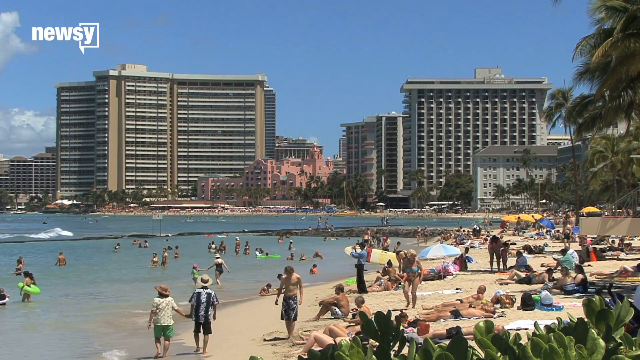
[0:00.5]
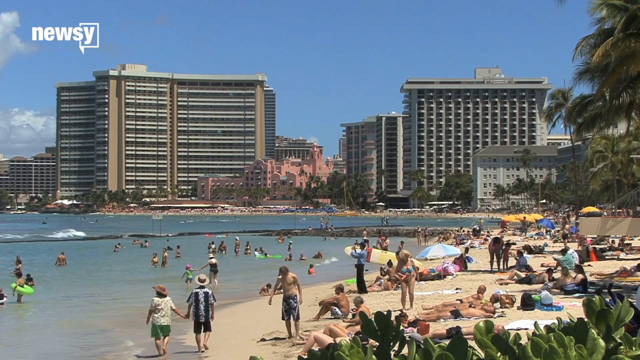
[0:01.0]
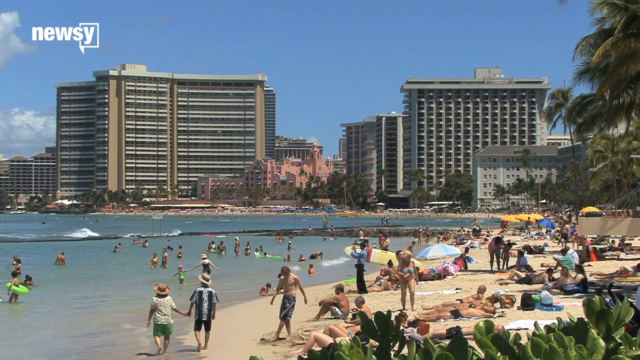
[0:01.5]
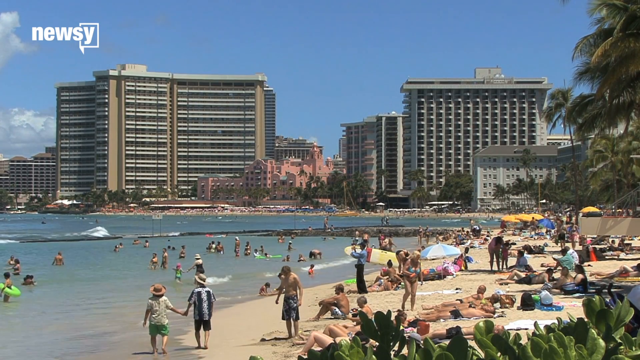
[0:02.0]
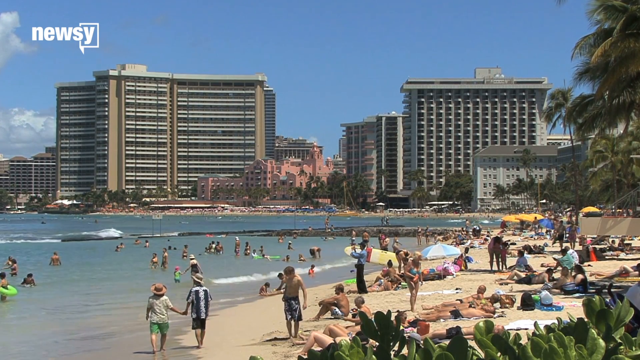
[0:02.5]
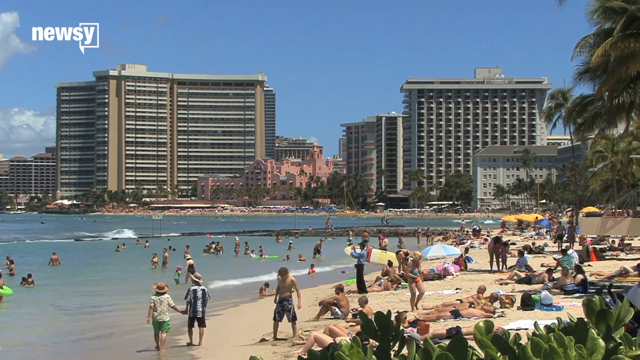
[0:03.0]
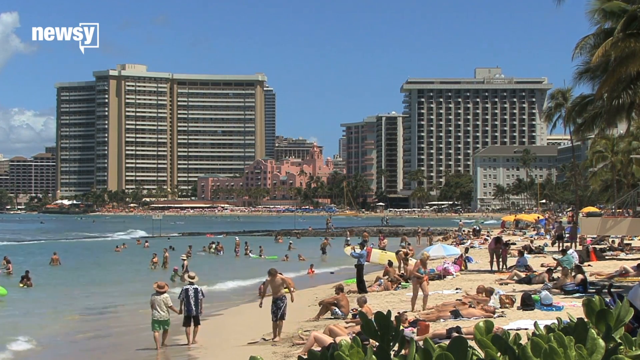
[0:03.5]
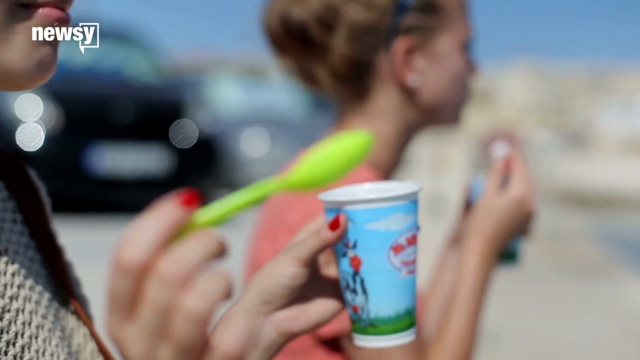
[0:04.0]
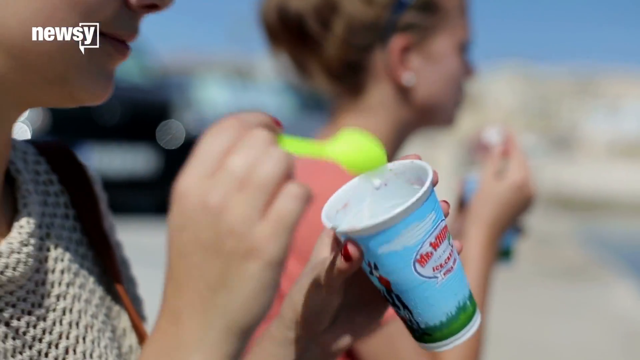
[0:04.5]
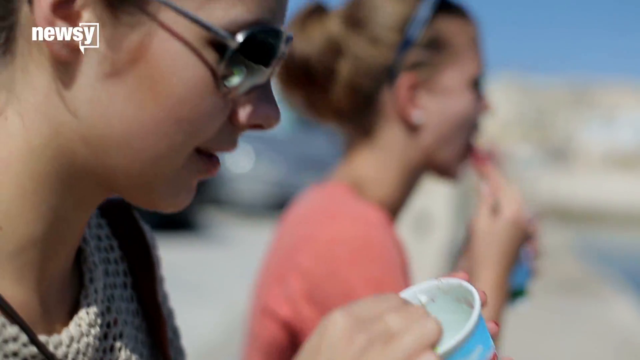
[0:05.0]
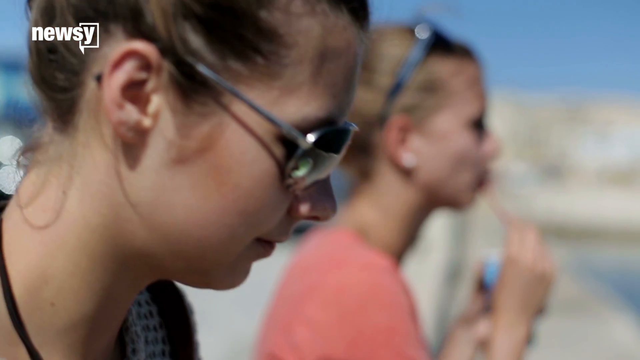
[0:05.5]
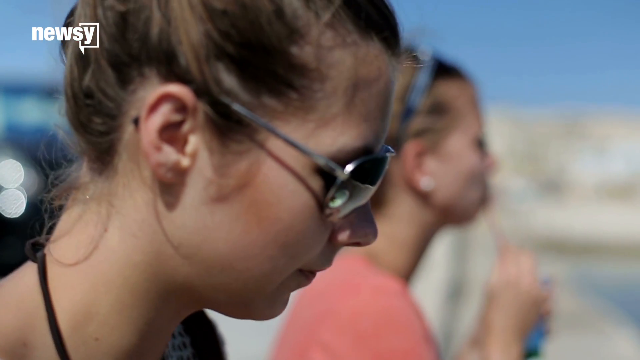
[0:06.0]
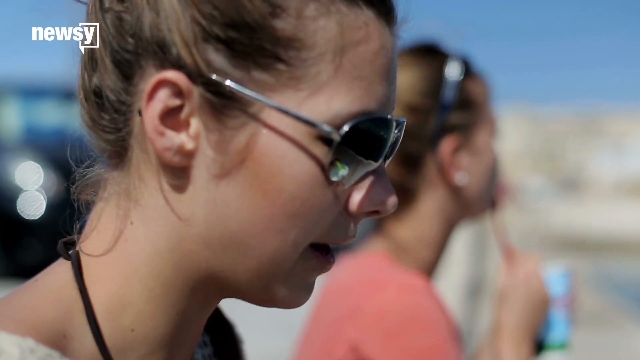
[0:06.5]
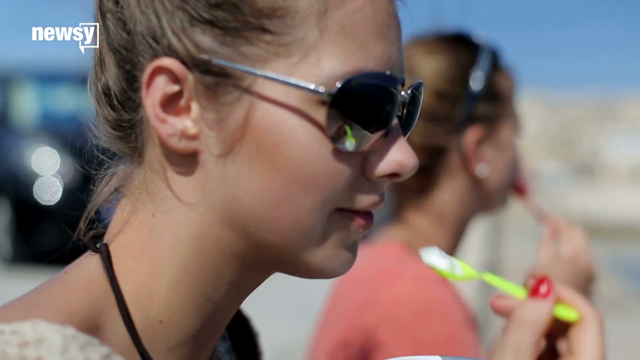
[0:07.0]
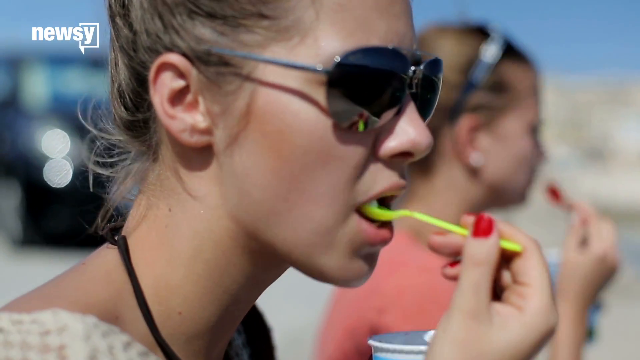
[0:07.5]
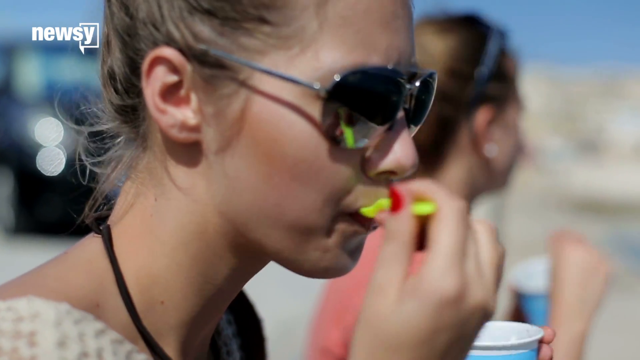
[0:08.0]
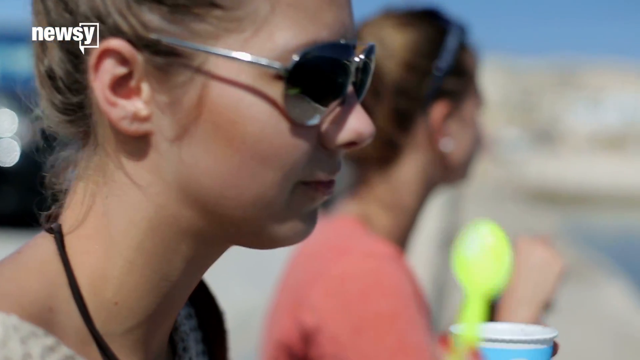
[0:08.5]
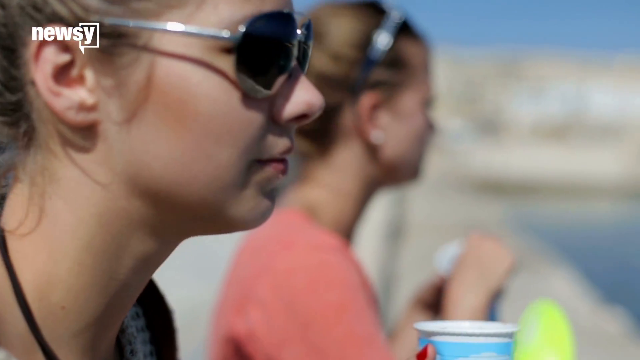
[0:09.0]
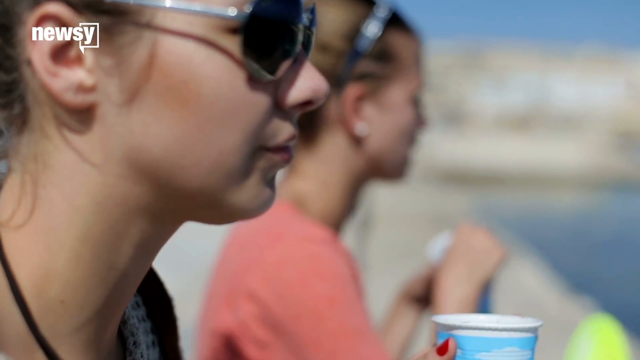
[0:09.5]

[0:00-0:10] A beach holiday destination has a long stretch of beach with the sea to the left-hand side. In the background, the beach and sand curve round, and just behind that are very tall buildings that make up the skyline. Hundreds of people on the beach are doing various different things: some are in the sea with inflatables, others are lying on the beach, some have parasols and some are carrying surfboards. A zoomed-in shot shows two girls wearing sunglasses eating ice cream with fluorescent spoons out of small tubs while they look out towards the beach.